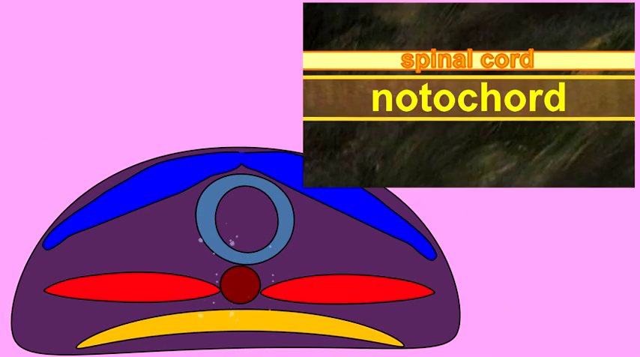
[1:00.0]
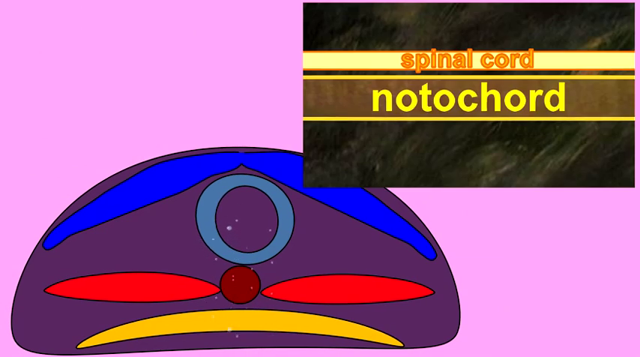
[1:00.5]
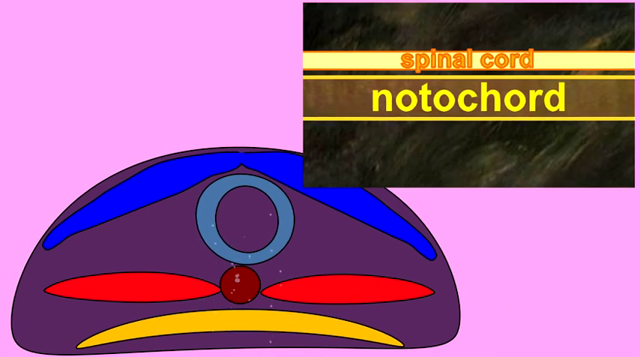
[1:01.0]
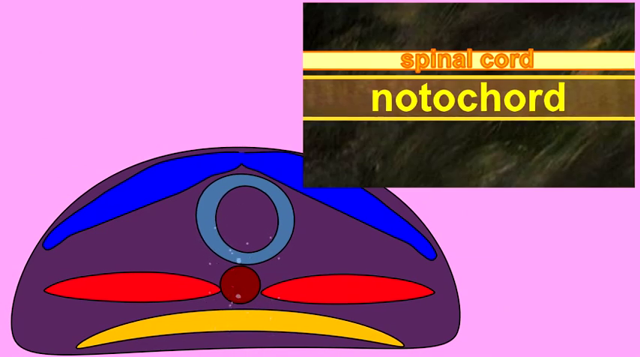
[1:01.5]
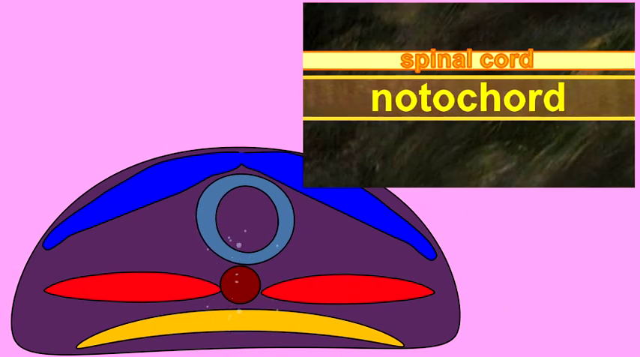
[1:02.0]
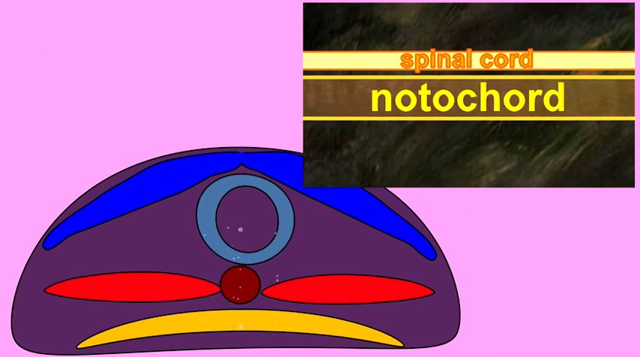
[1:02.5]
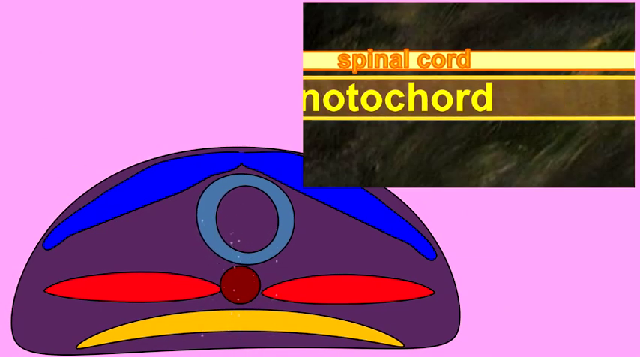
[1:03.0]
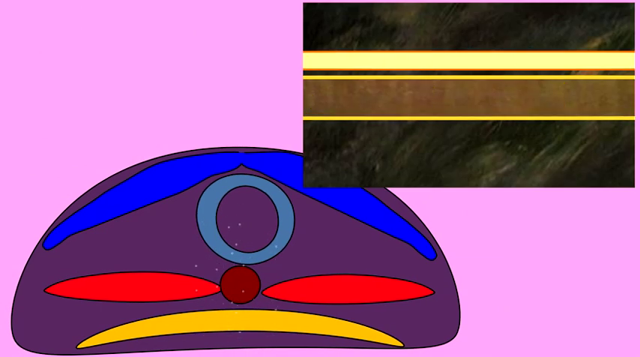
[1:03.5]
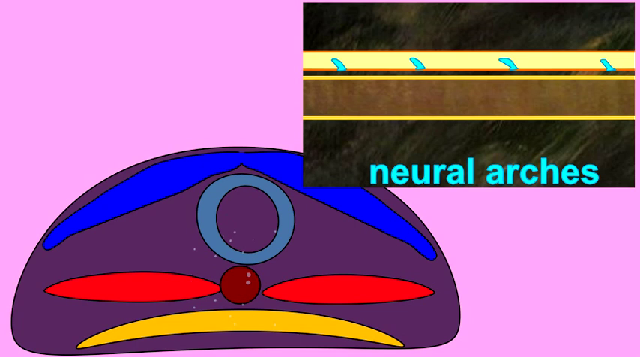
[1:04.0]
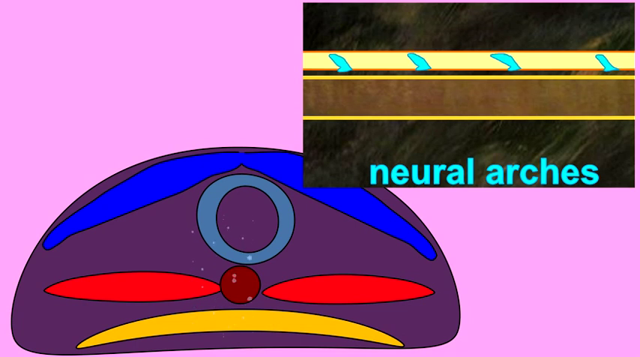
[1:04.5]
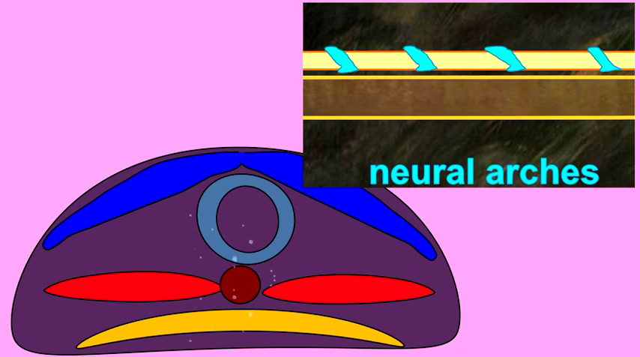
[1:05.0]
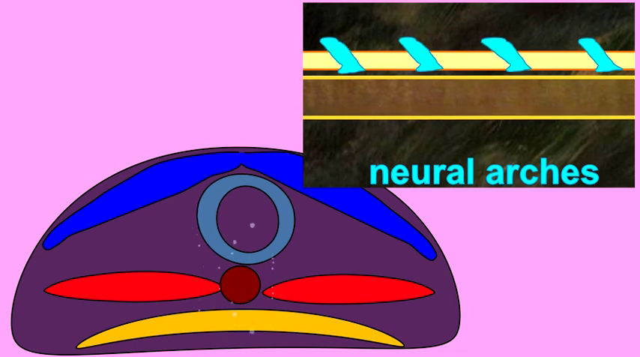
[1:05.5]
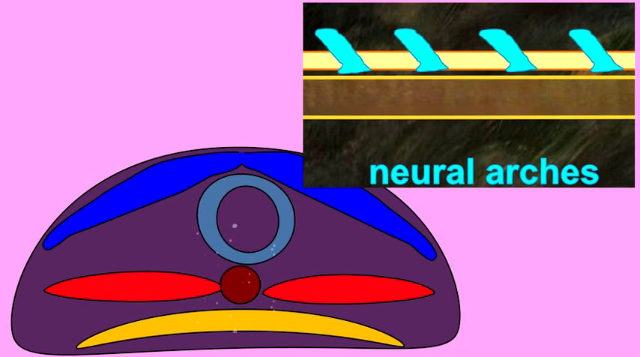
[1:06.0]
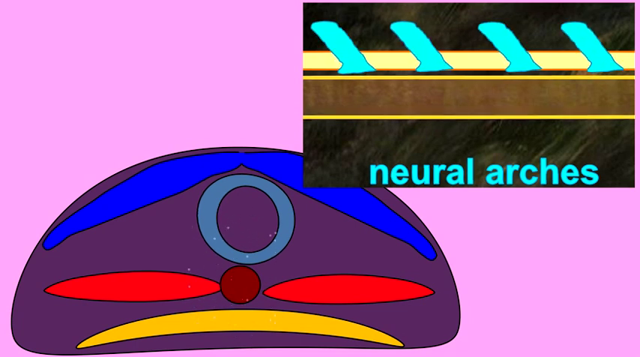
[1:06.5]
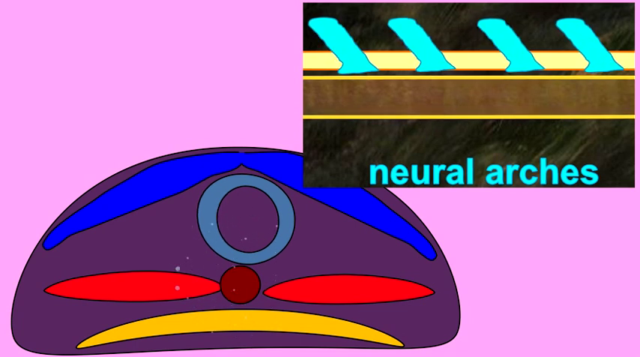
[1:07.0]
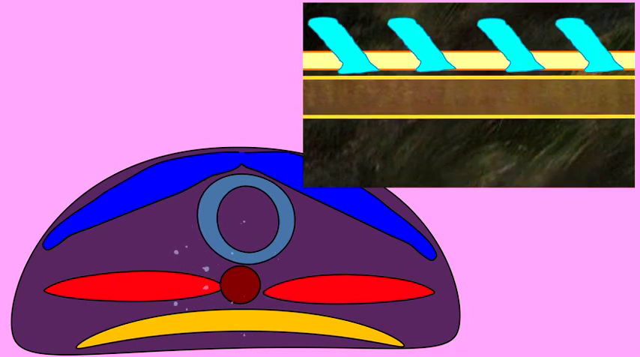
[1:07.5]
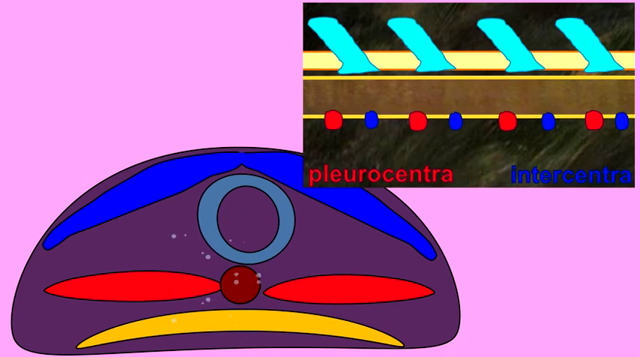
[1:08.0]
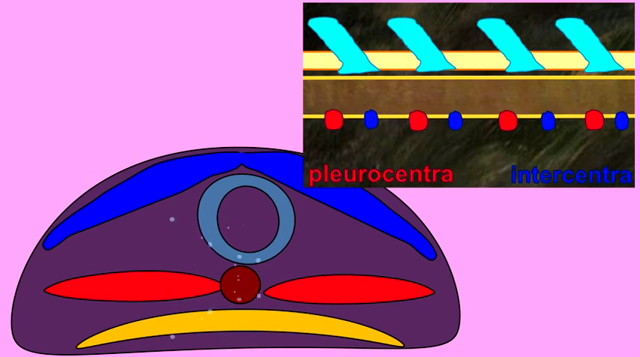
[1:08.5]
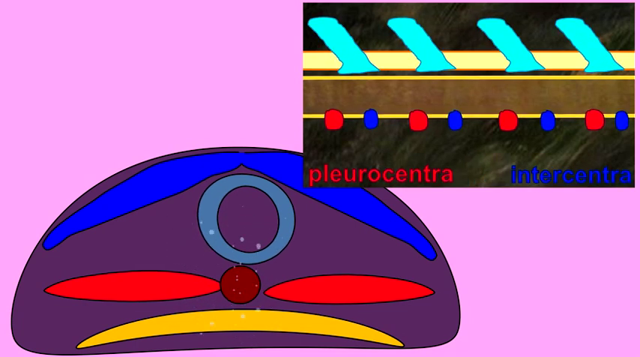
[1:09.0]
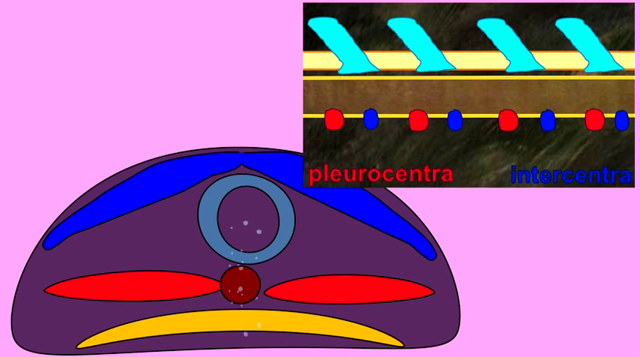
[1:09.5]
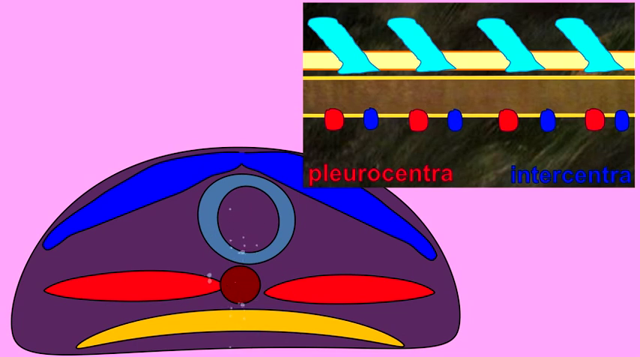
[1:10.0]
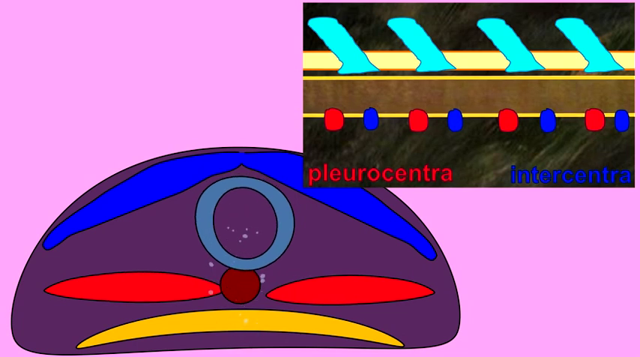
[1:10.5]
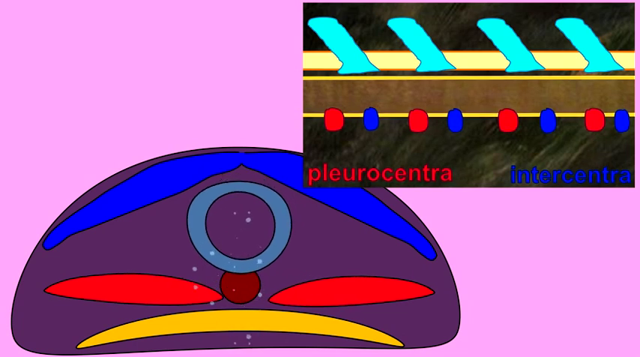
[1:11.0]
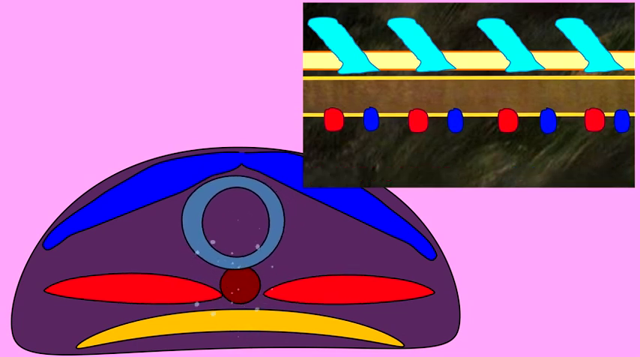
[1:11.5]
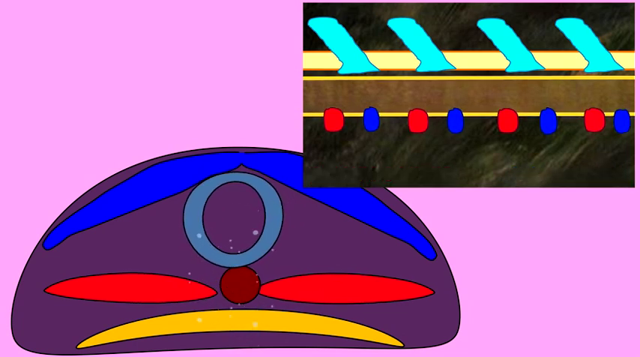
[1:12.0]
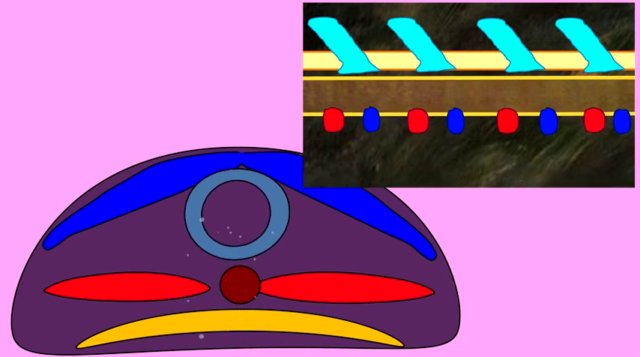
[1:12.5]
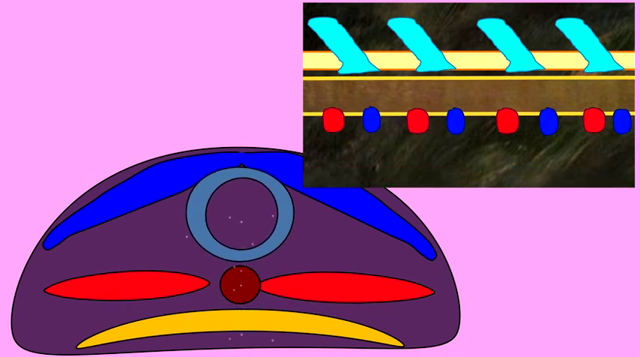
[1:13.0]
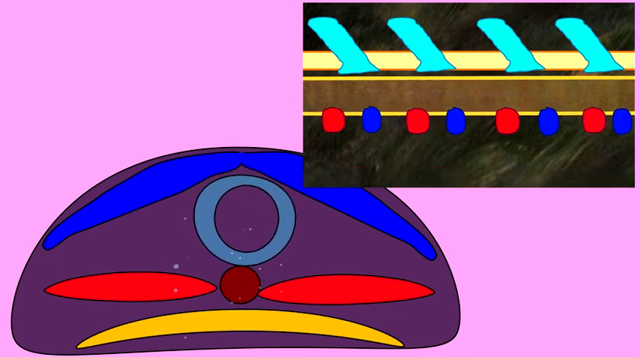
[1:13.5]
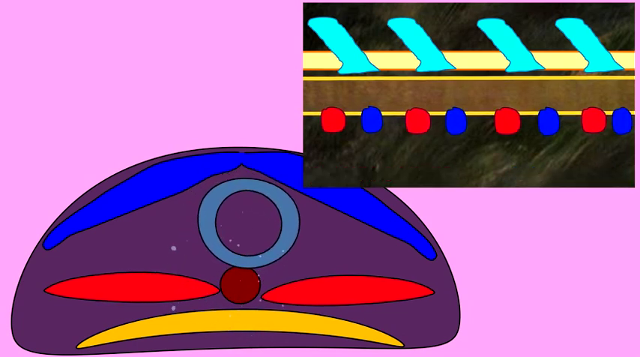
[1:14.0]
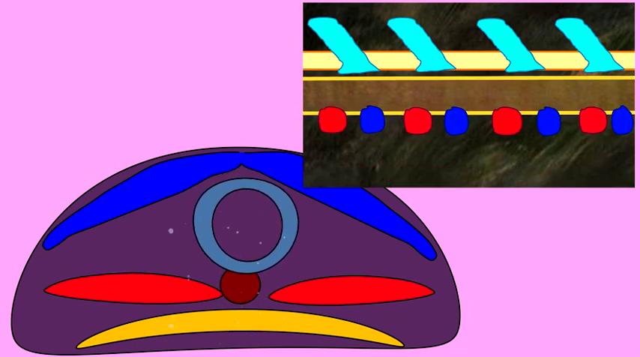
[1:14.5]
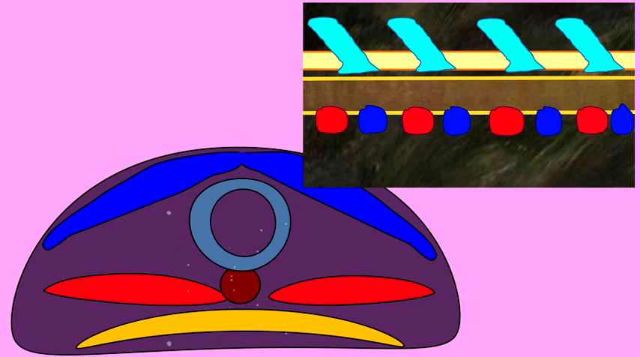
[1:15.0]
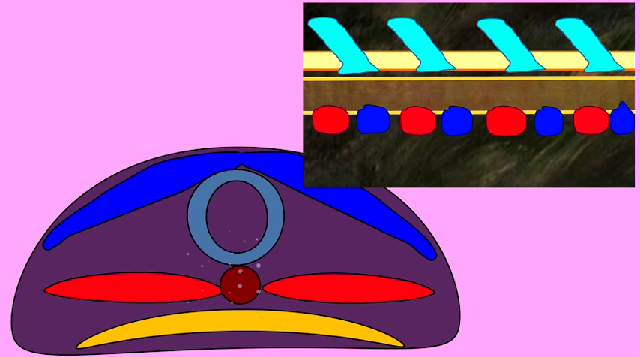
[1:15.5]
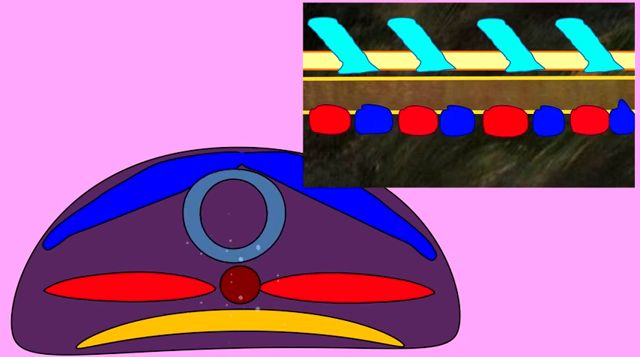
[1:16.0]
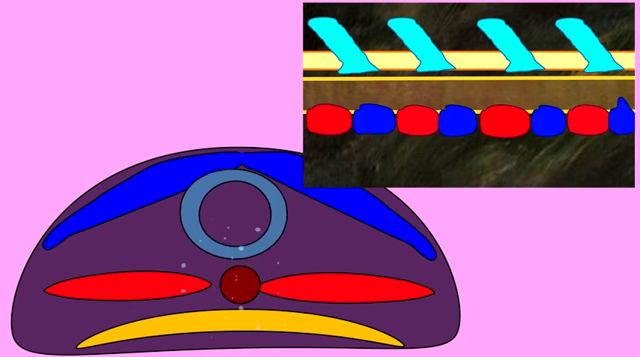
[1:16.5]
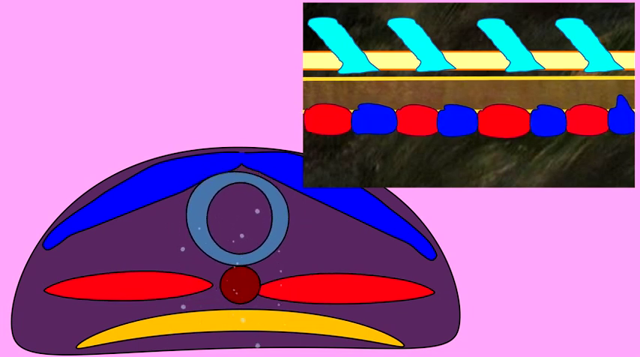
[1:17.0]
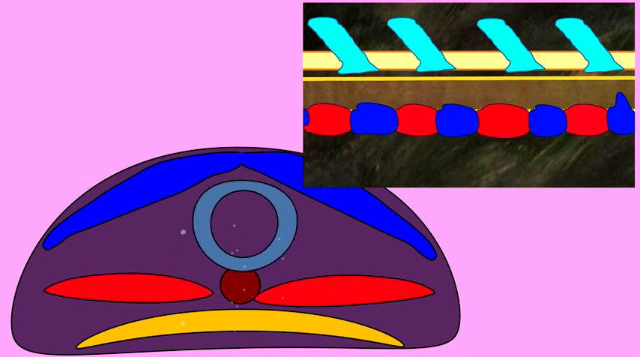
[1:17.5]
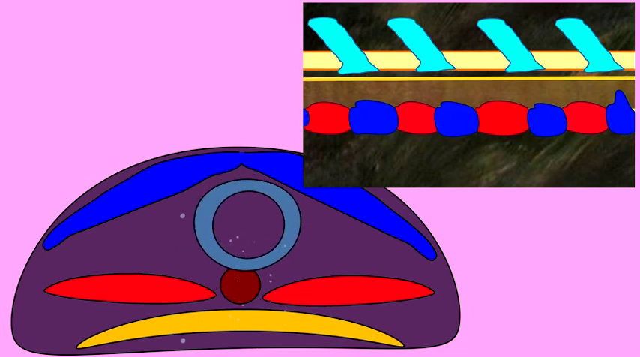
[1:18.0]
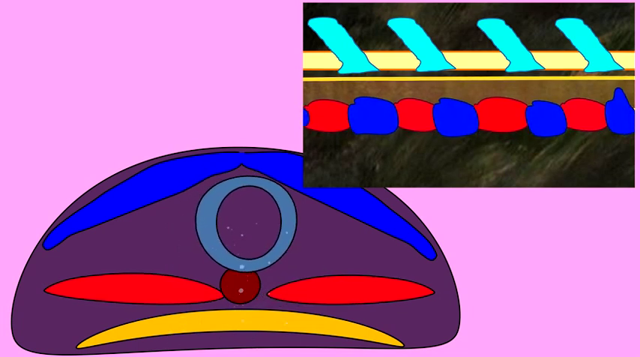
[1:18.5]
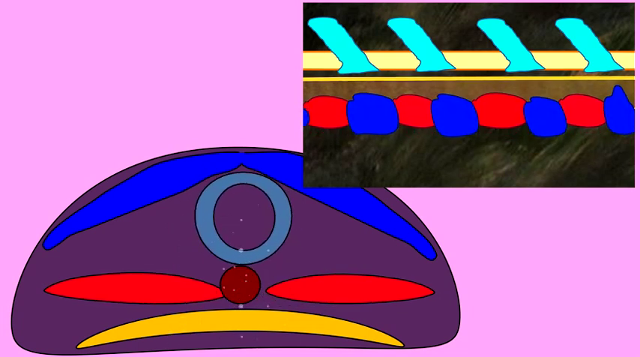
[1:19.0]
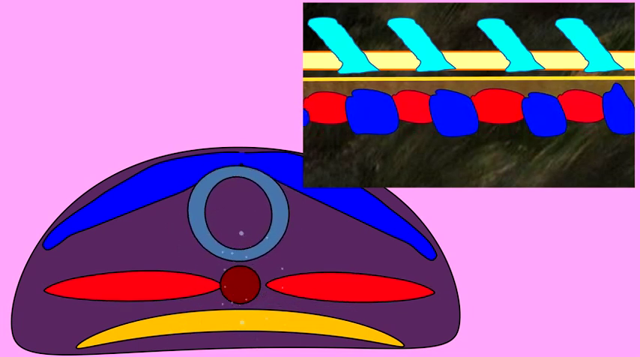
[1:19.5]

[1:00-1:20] The bubbles are on the left, and on the right is a square box with the words "neural arches" in turquoise. Above, four items start small and grow big. Underneath are red and blue dots, four red and four blue; red stands for pleurocentra and blue for intercentra. On the diagram in the background, the light blue circle bounces around inside the bigger circle. The red ovals on each side of the maroon circle move up and down and left to right, no longer attached to the maroon circle. As the blue circle bounces around, the pleurocentra and intercentra grow bigger. Bubbles, big and small, are still all over the middle of the picture. As the blue circle moves around, it sometimes overlaps the maroon circle and bounces, hitting the blue item above it.